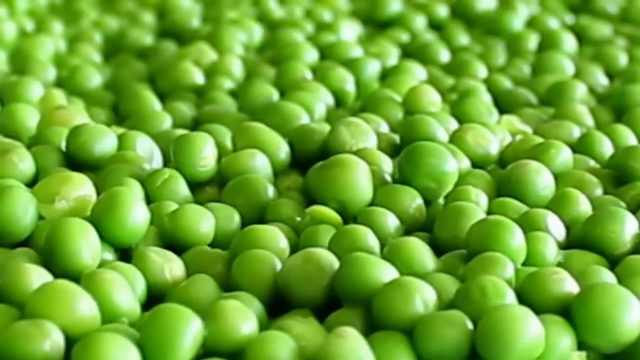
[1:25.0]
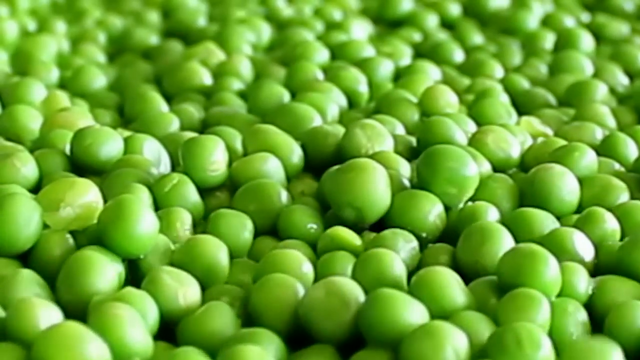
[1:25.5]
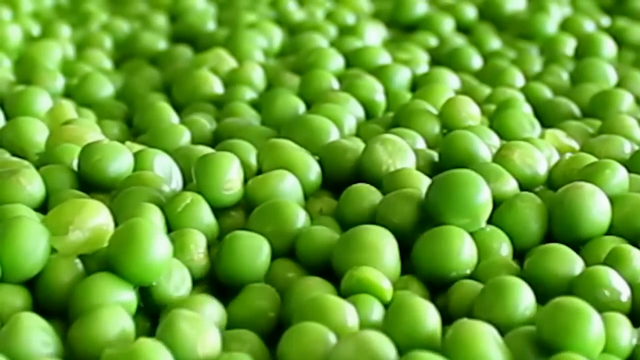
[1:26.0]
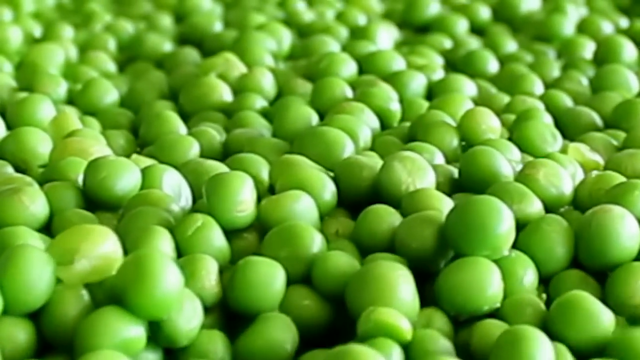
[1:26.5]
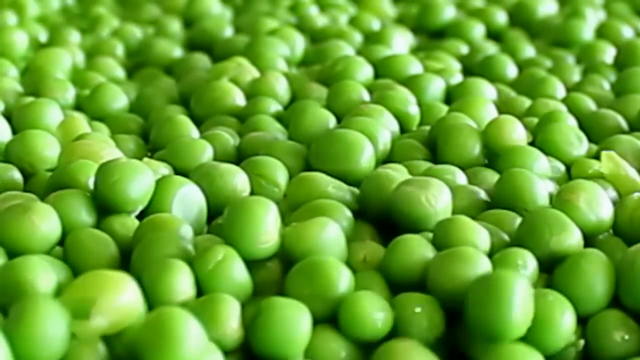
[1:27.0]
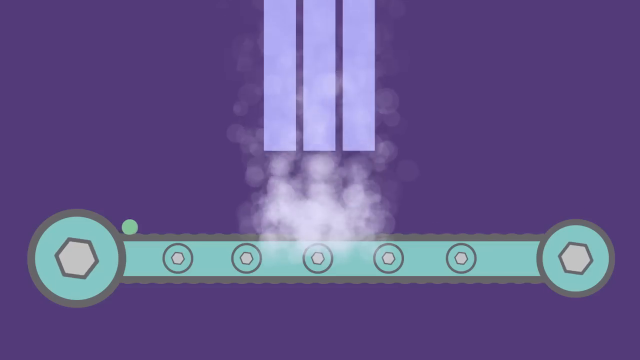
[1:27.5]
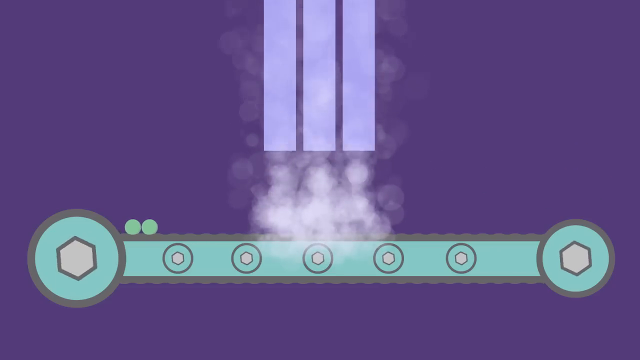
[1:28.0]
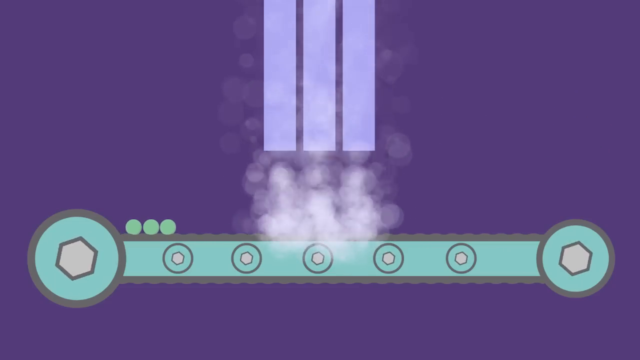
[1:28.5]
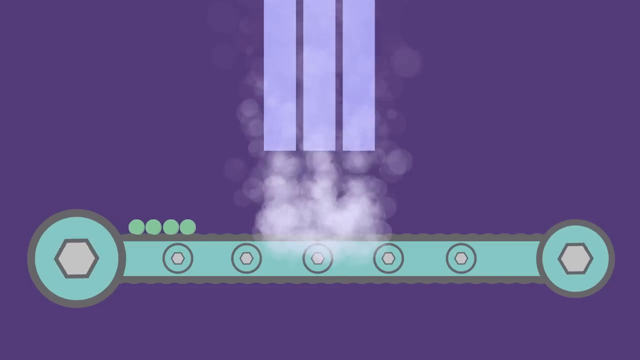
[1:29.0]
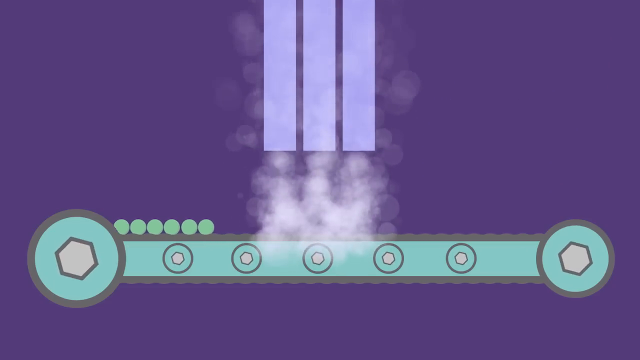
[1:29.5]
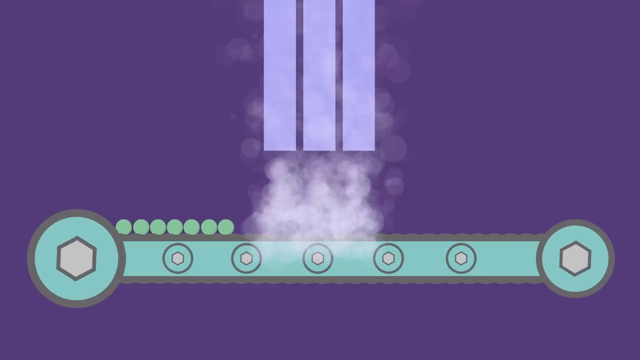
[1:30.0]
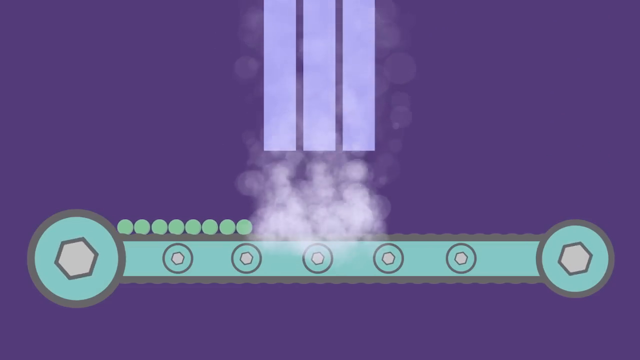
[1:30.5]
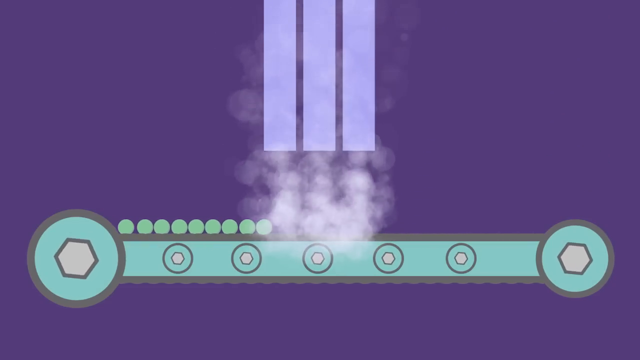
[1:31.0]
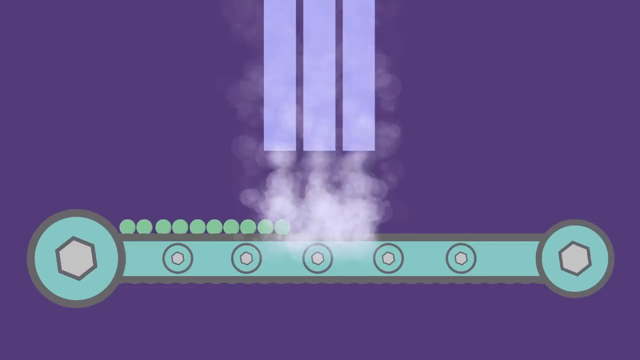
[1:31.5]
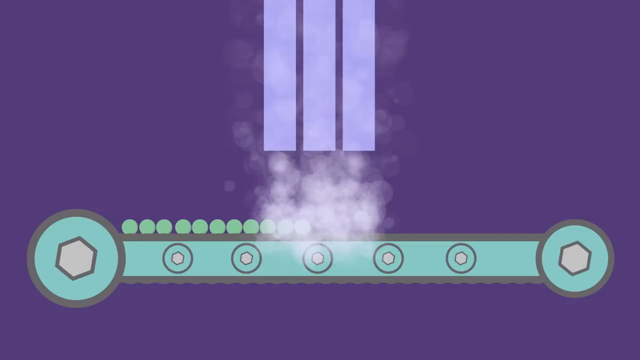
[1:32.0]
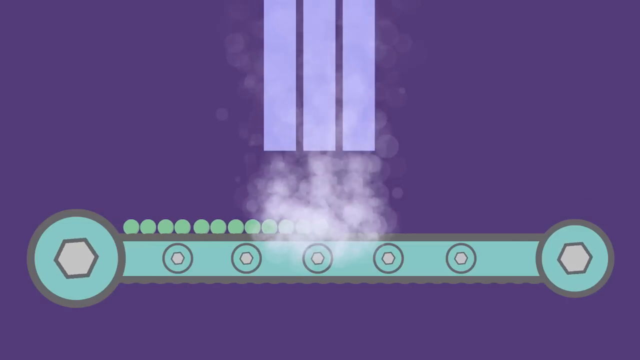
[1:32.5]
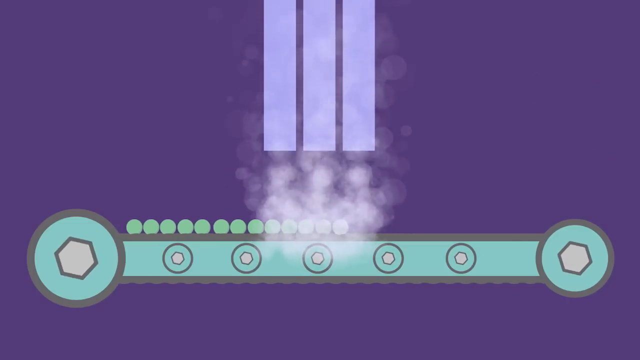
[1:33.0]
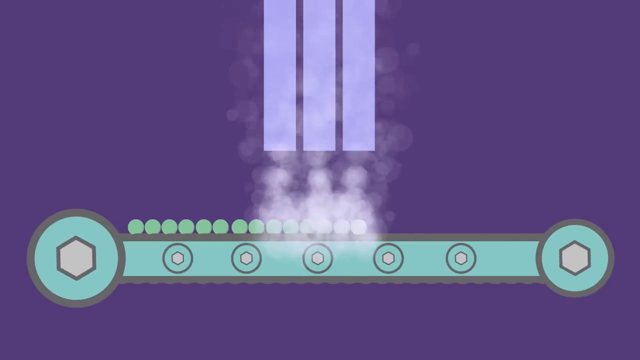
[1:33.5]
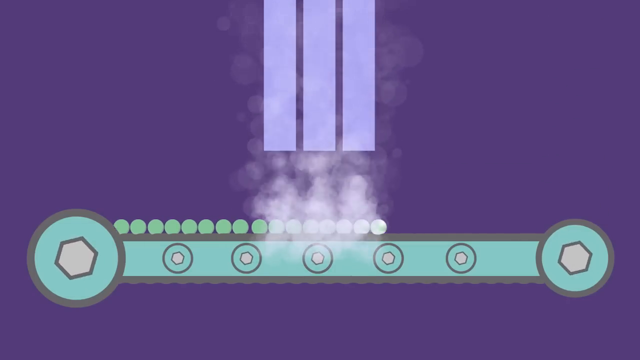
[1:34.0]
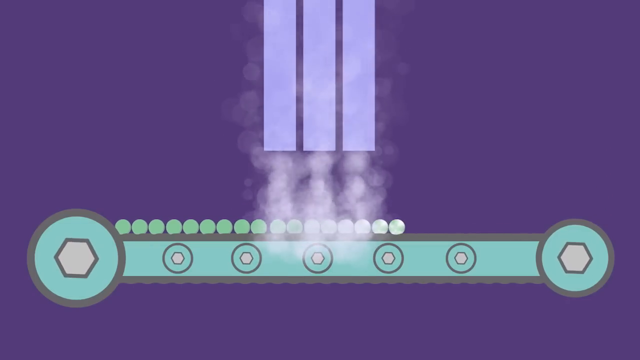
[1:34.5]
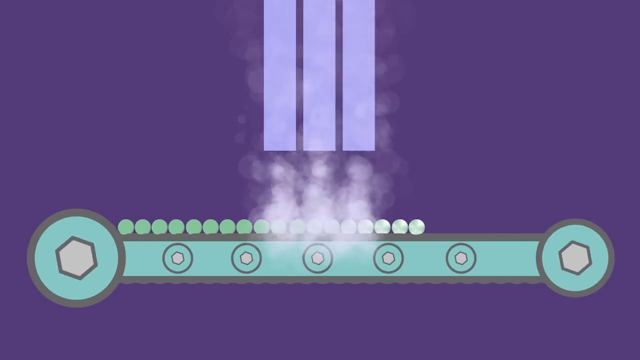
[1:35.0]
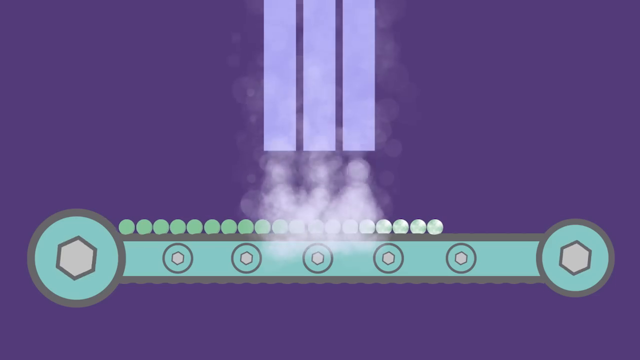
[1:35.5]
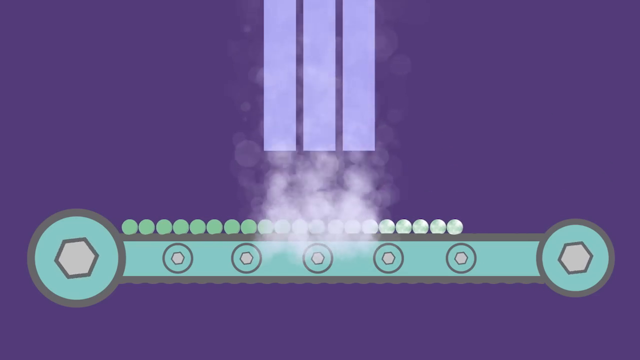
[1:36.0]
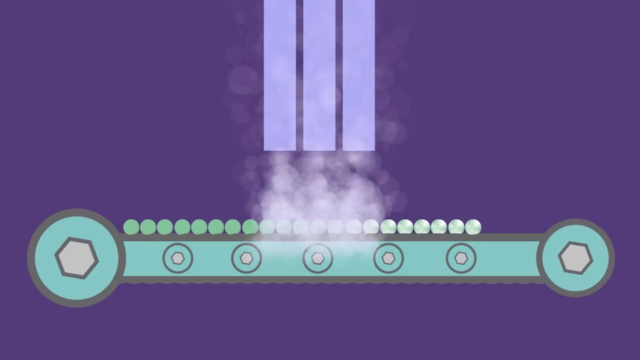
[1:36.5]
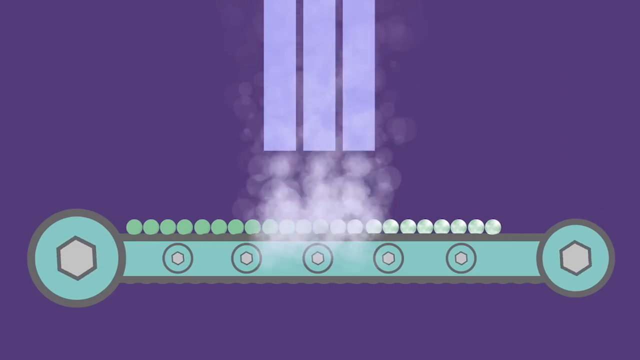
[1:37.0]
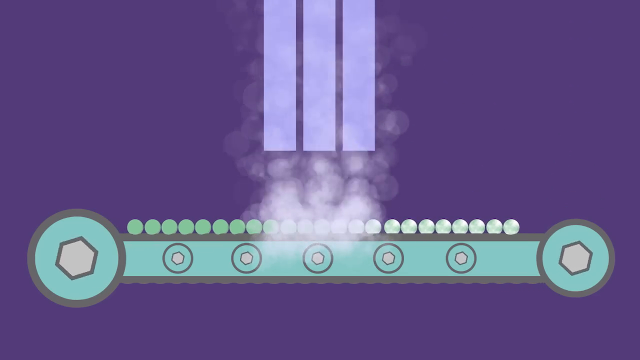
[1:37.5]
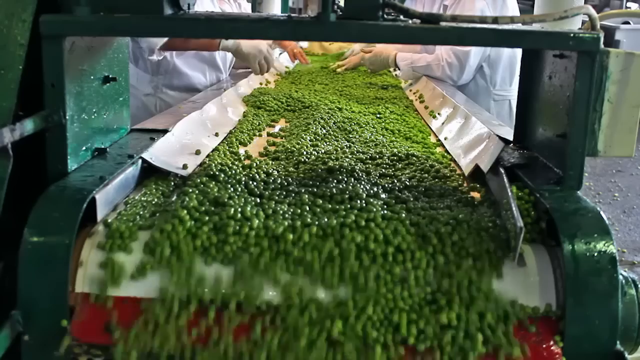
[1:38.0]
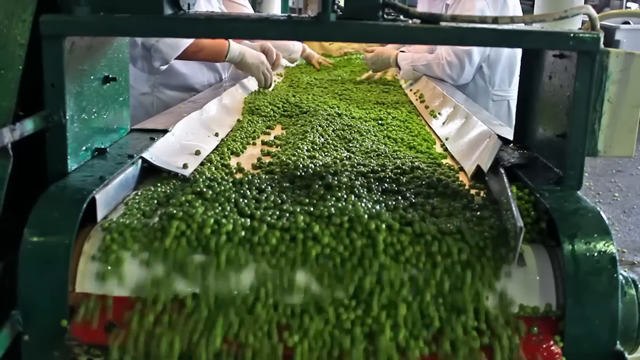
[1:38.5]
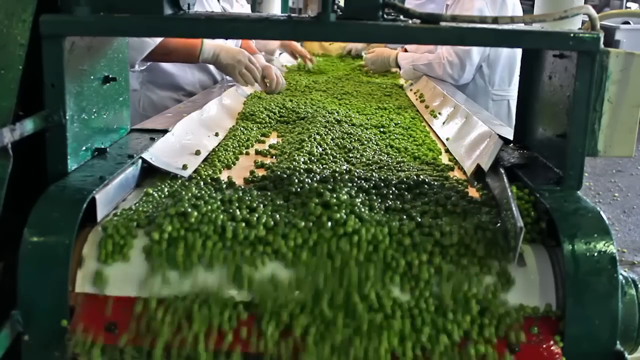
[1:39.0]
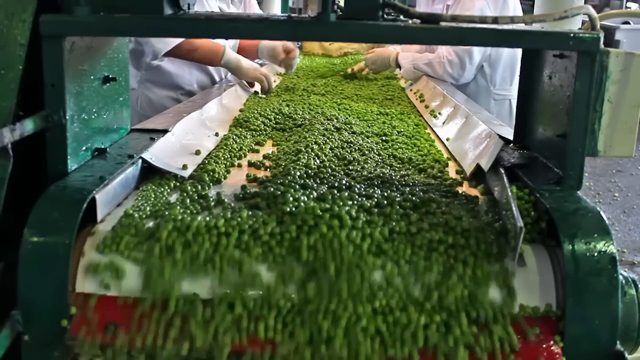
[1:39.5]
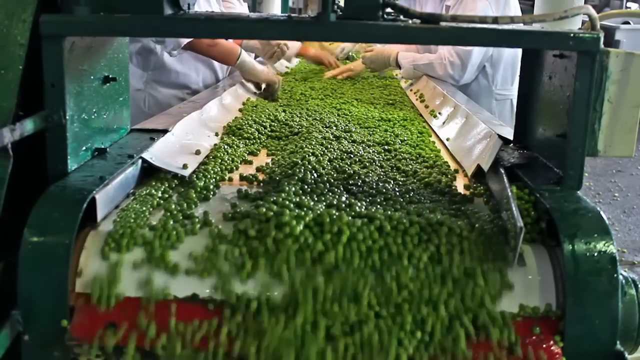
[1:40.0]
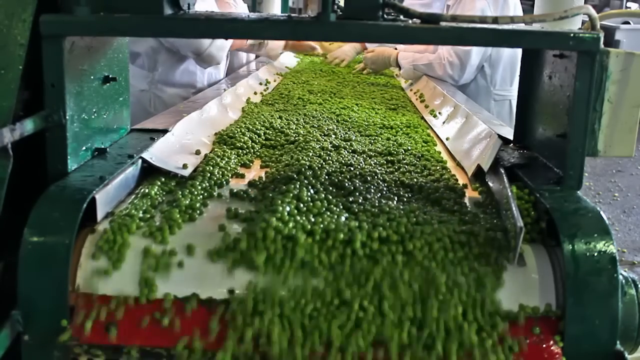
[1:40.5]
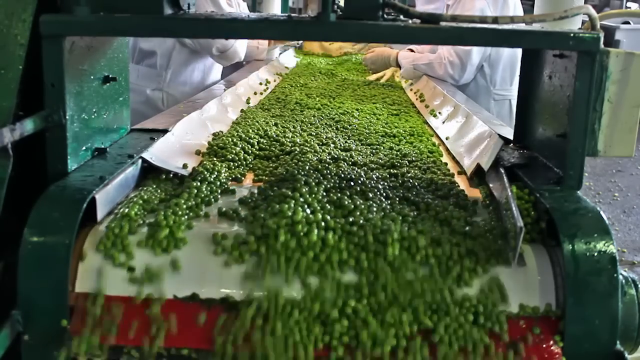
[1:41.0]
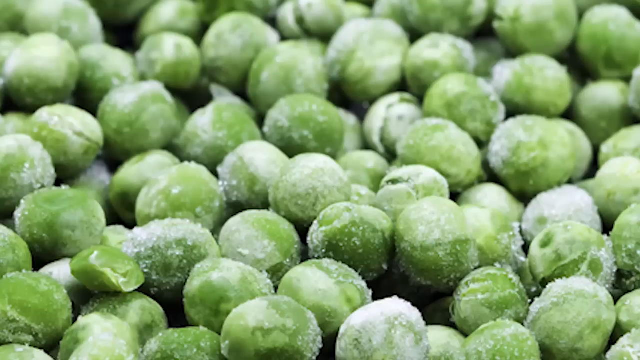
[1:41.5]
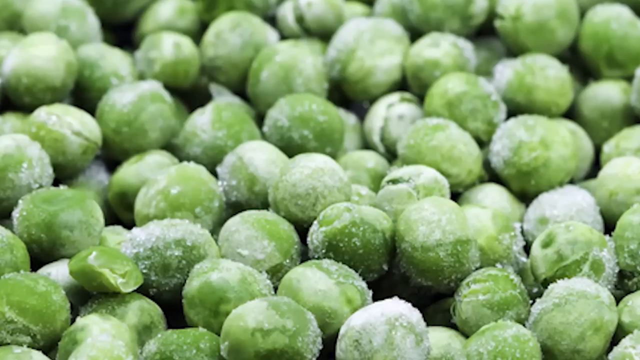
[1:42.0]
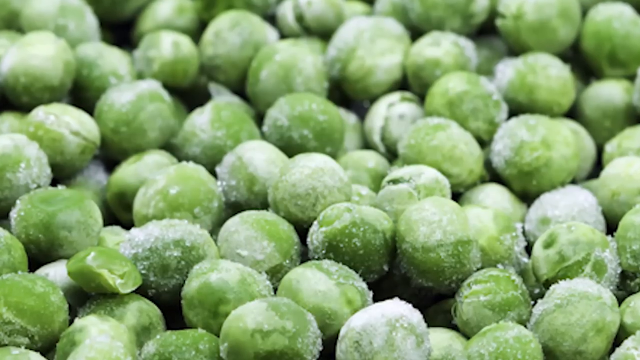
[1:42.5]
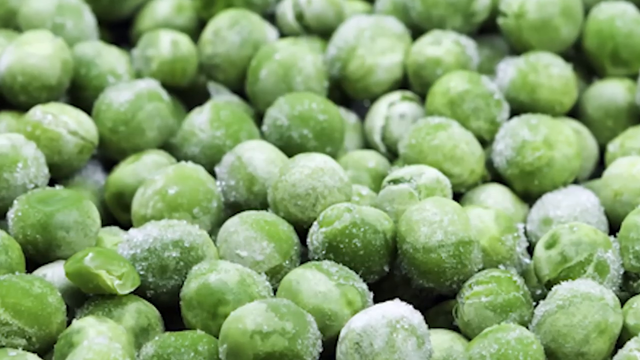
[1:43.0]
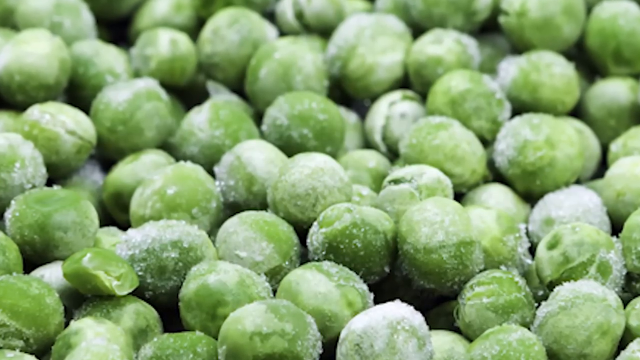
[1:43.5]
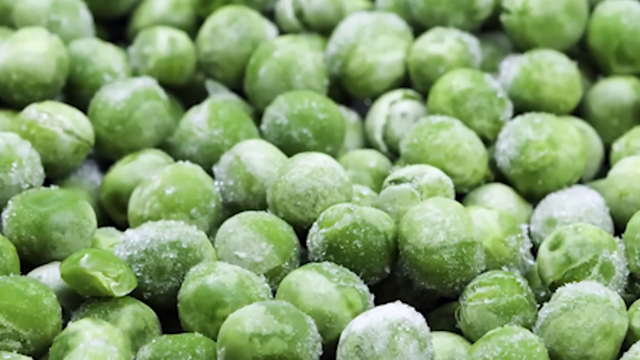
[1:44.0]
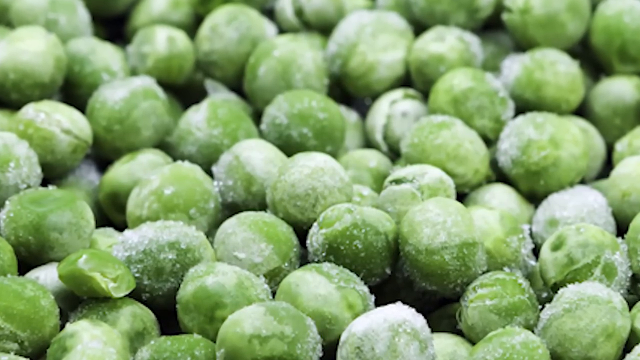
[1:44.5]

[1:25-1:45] The peas are shown up close, apparently on the conveyor belt. An illustration of the conveyor belt follows, which looks like it shows the peas being steamed or cleaned, or possibly frozen. Another shot of the conveyor belt shows people standing on either side as the peas move along it; they appear to be picking peas off the belt, possibly bad ones. They wear gloves and white jackets. A close-up of frozen peas follows.